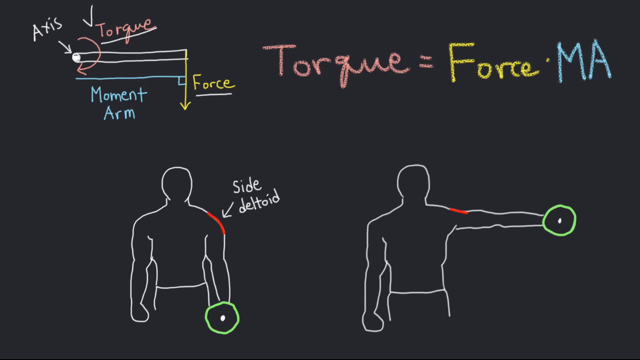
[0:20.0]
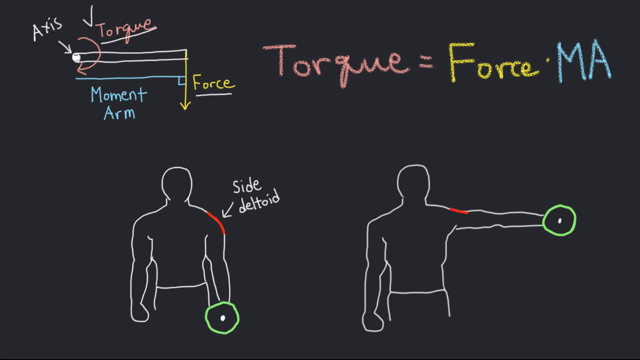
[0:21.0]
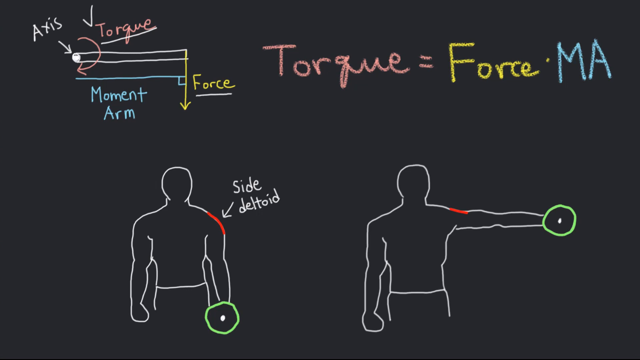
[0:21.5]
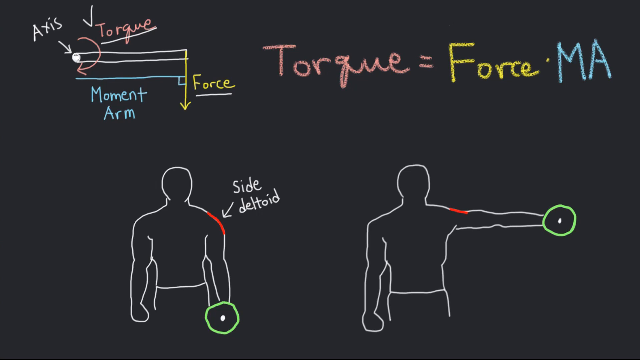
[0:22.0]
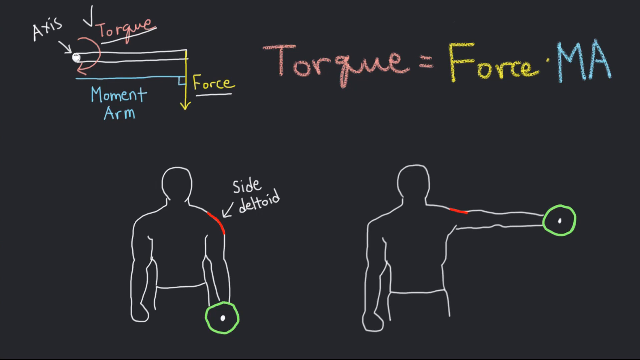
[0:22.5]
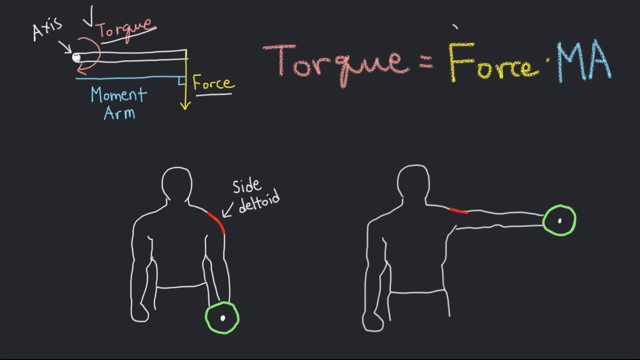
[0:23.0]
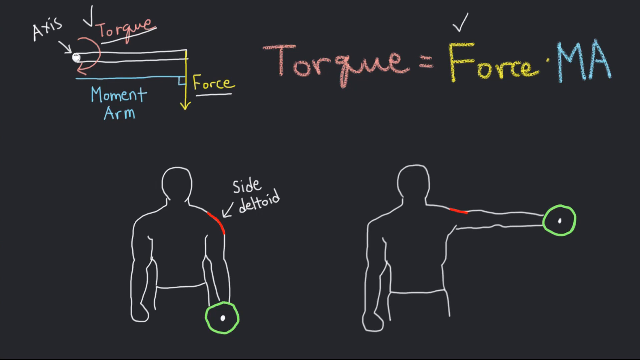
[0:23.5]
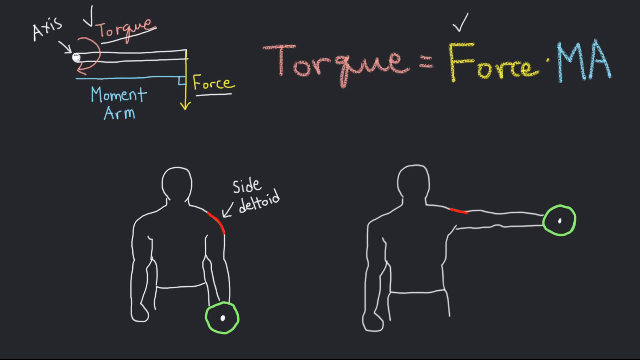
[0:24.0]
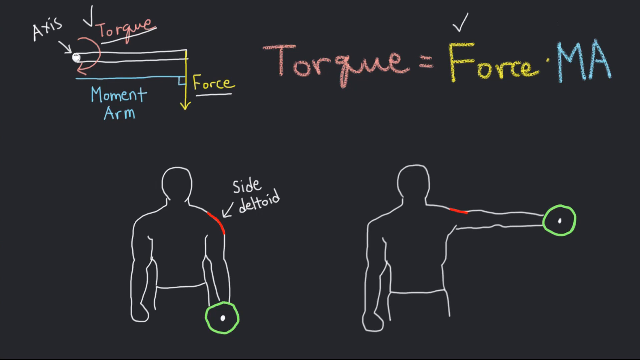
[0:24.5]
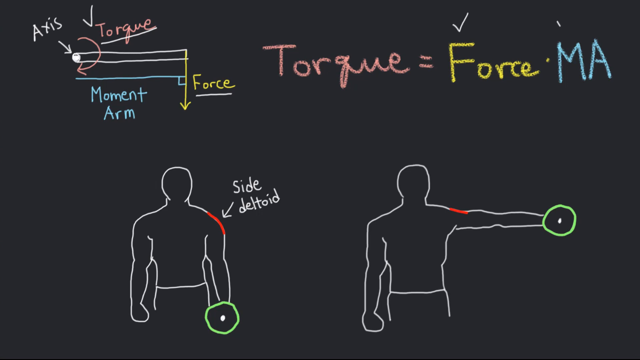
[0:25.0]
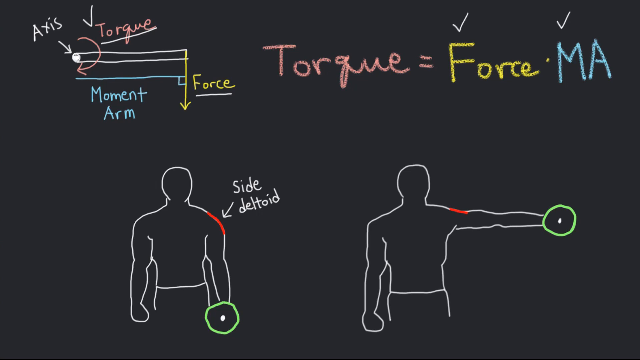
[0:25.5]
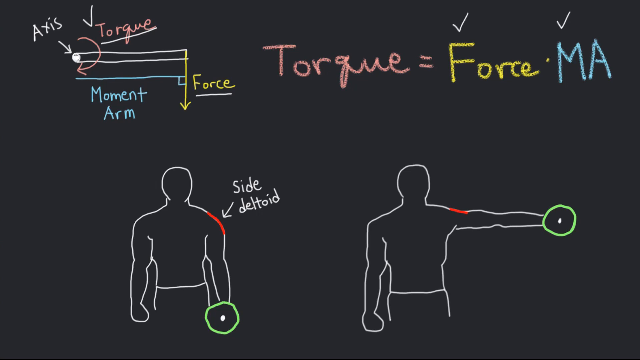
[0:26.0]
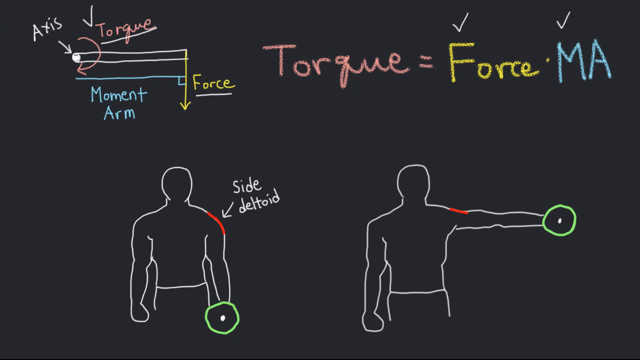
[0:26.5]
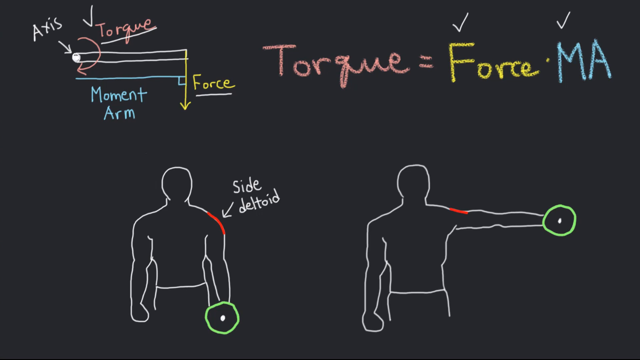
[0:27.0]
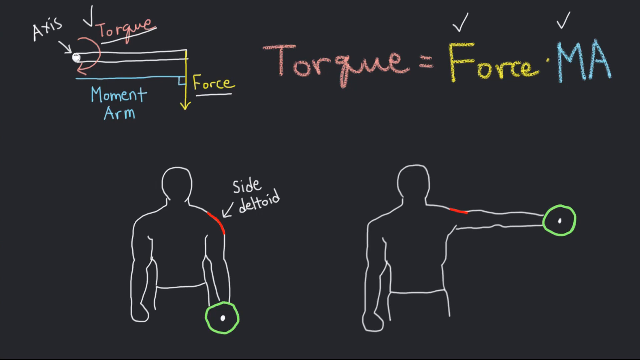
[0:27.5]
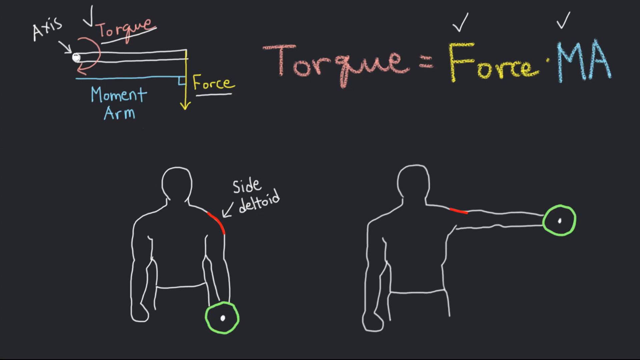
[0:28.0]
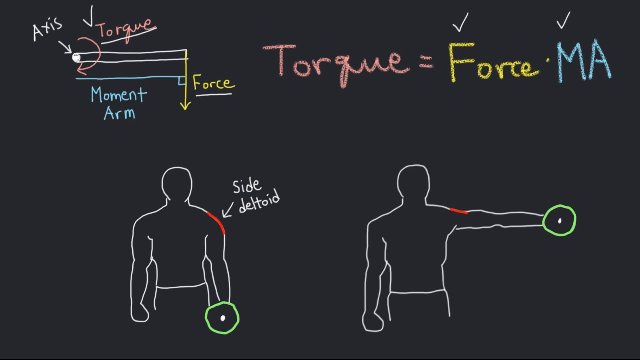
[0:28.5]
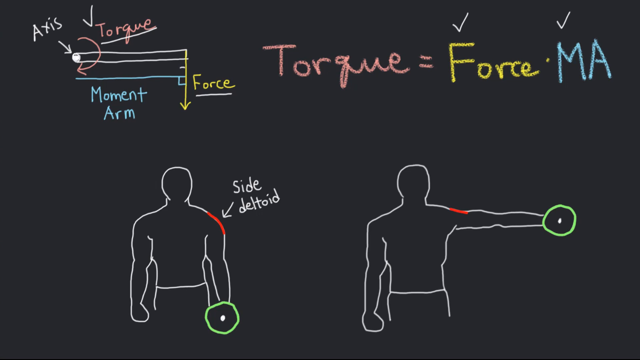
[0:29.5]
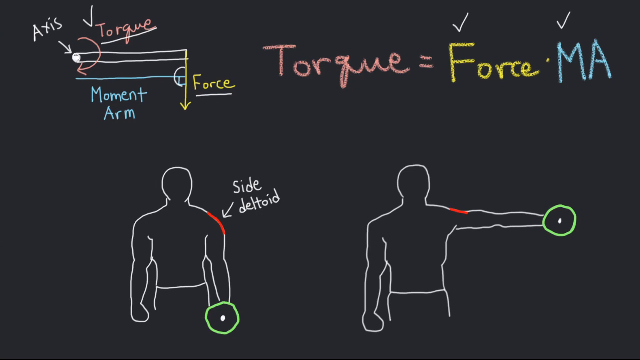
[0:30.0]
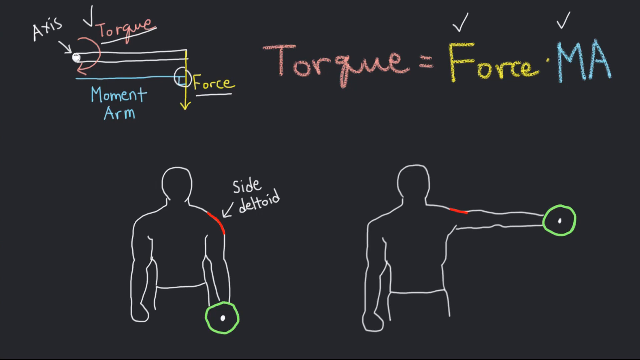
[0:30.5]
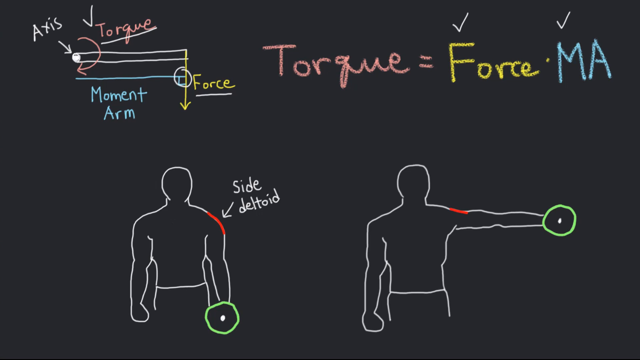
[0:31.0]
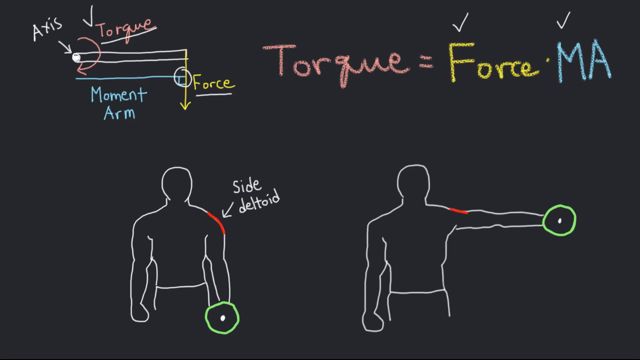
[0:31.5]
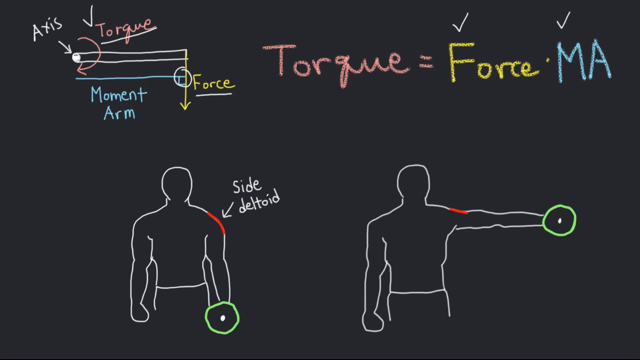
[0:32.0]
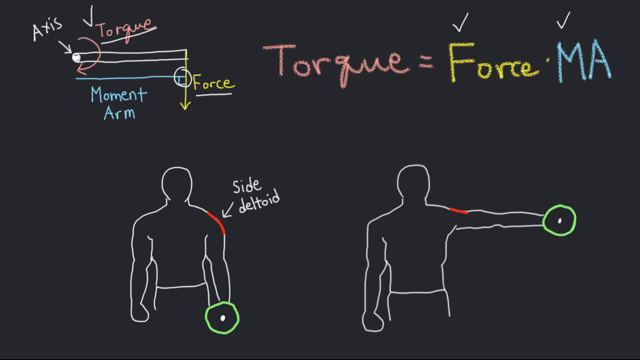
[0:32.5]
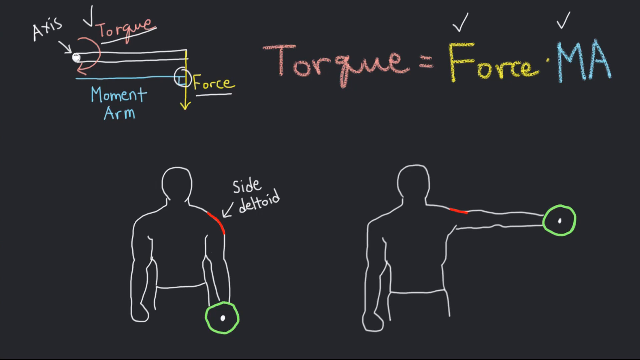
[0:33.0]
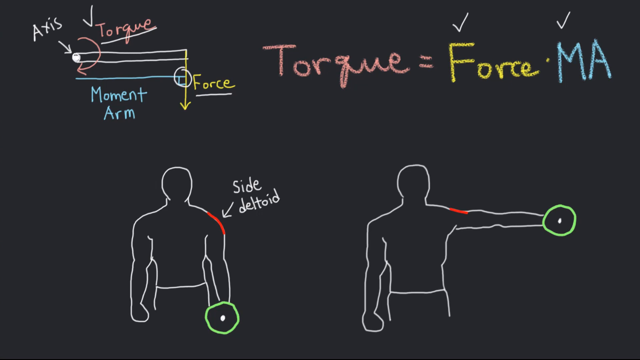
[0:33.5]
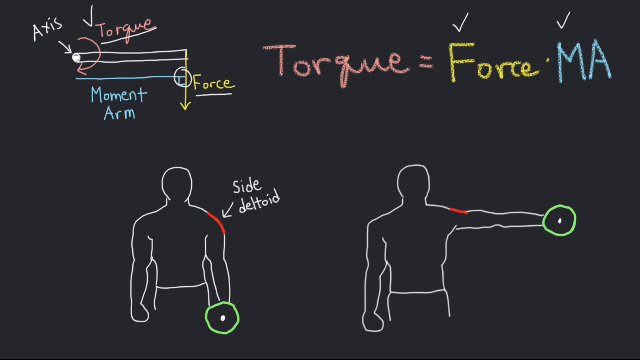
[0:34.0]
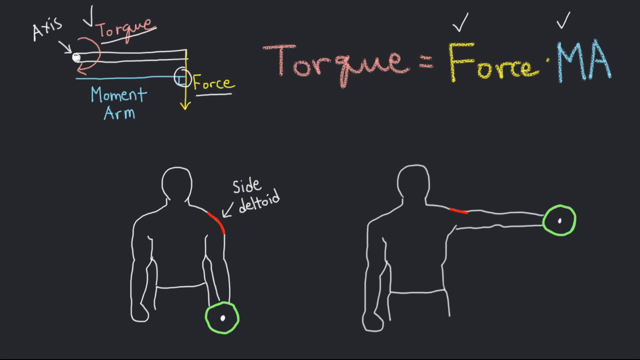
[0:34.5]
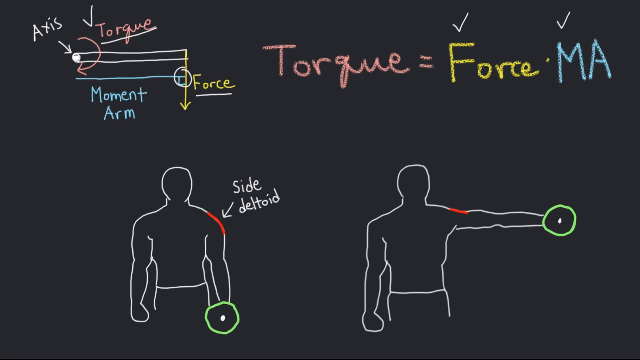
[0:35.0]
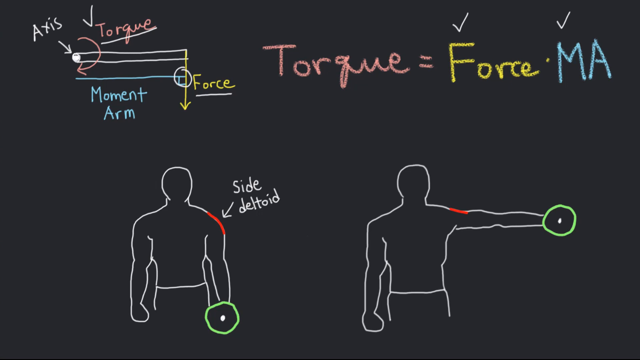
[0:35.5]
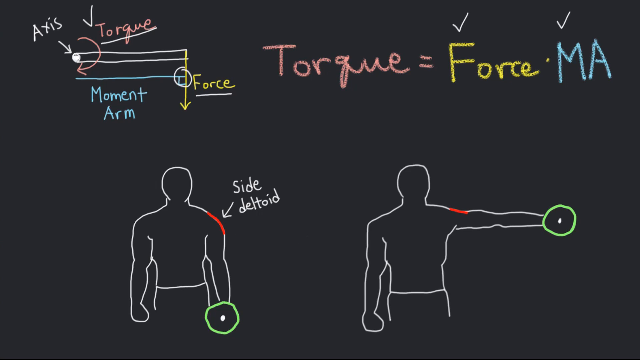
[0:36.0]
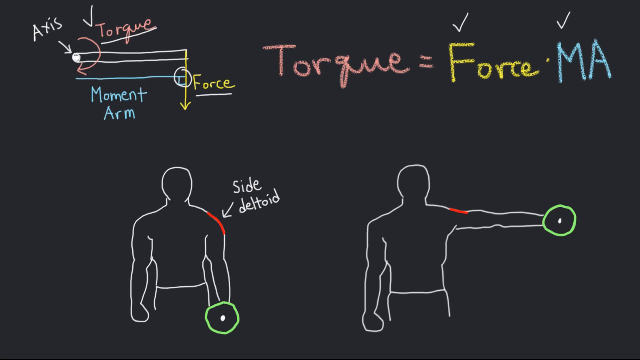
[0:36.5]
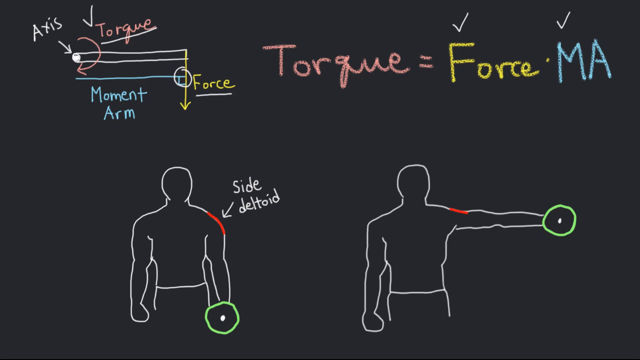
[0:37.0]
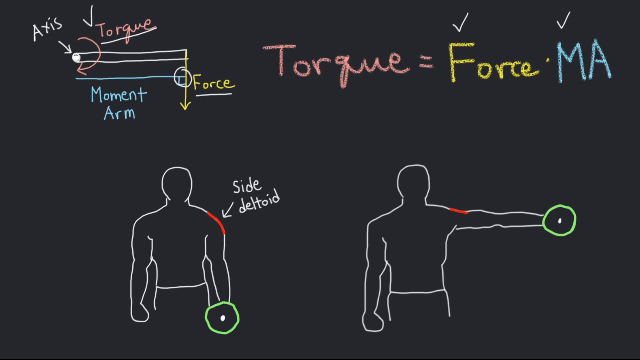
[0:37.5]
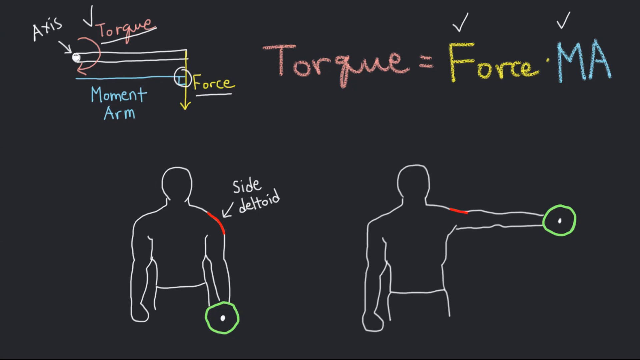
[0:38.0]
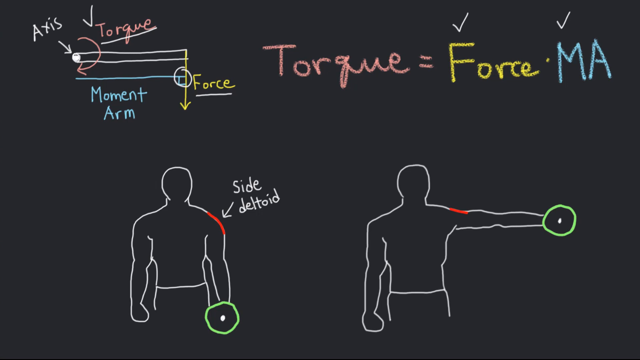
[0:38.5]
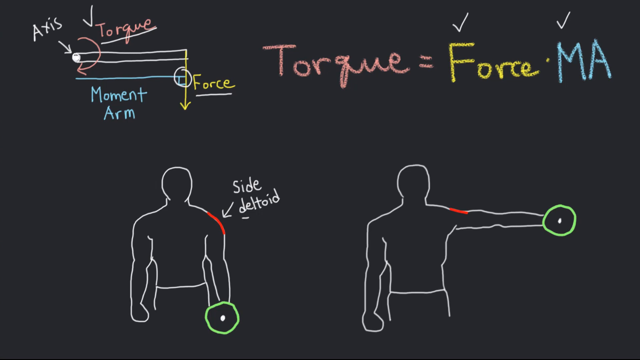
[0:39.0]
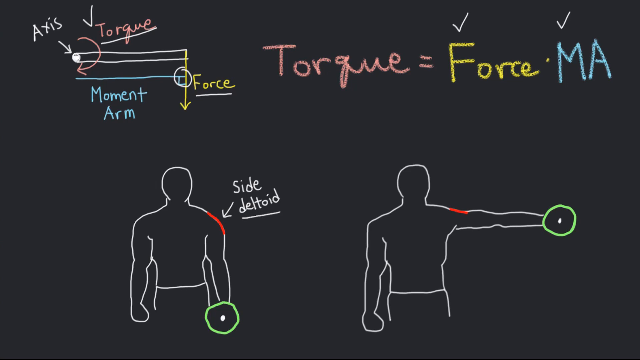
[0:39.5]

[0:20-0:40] On the blackboard with the torque formula and silhouette diagrams, a check mark is added above force and ma and the "torque equals force times ma" formula. A right angle point next to force in the top left is circled. Then "deltoid" in the "side deltoid" label of the left figurine in the bottom left is underlined. The blackboard shows multicolored chalk in pink, reddish pink, yellow, blue and green, and the two silhouettes remain at the bottom. The content appears to concern torque and motion, maybe physics.